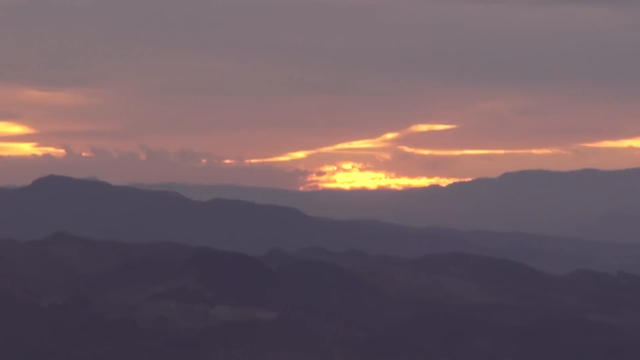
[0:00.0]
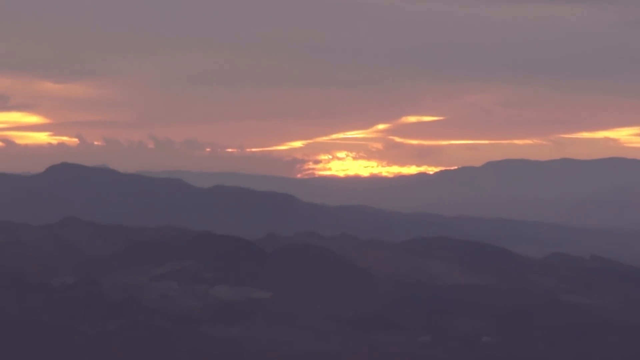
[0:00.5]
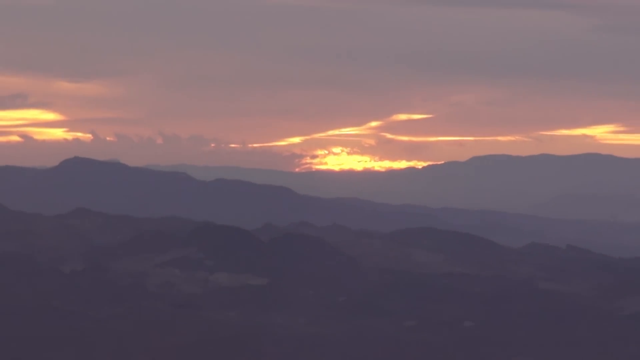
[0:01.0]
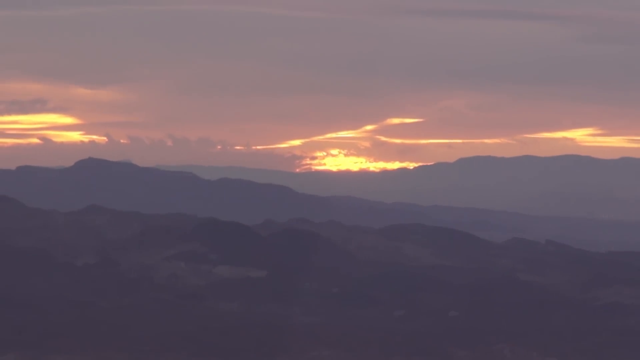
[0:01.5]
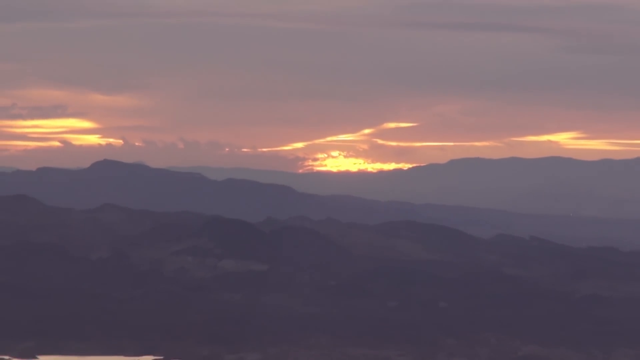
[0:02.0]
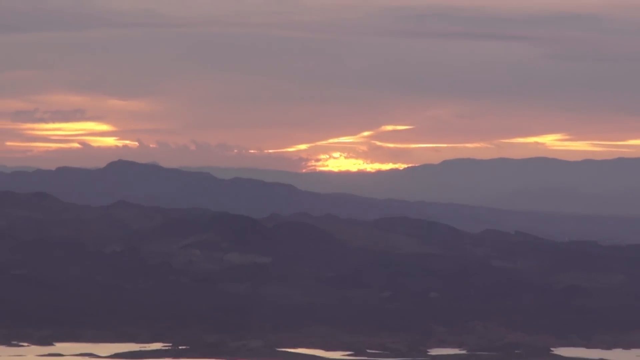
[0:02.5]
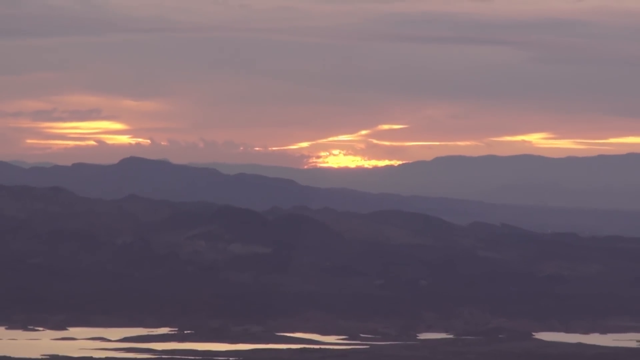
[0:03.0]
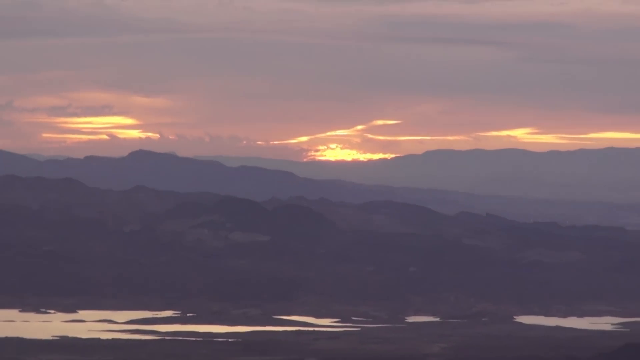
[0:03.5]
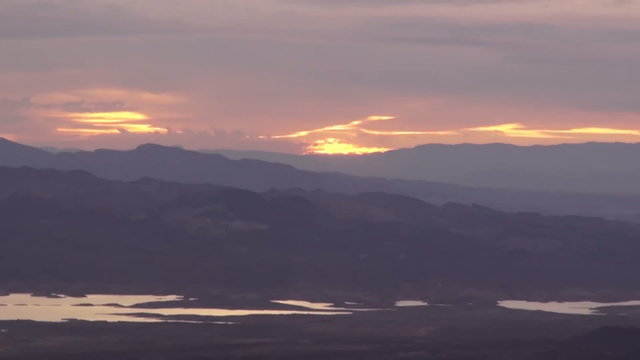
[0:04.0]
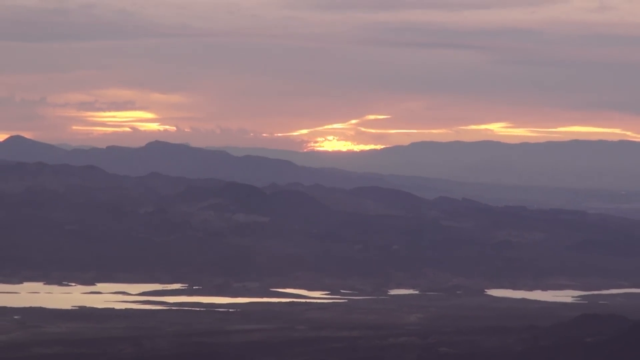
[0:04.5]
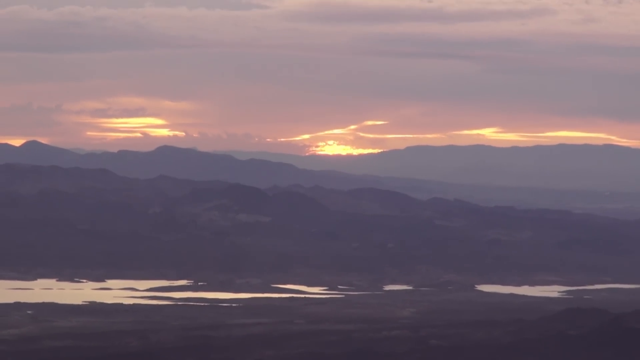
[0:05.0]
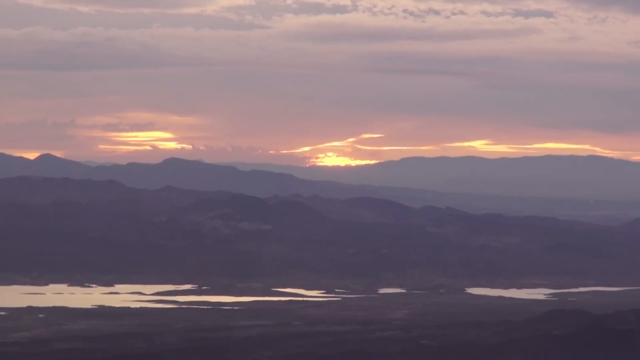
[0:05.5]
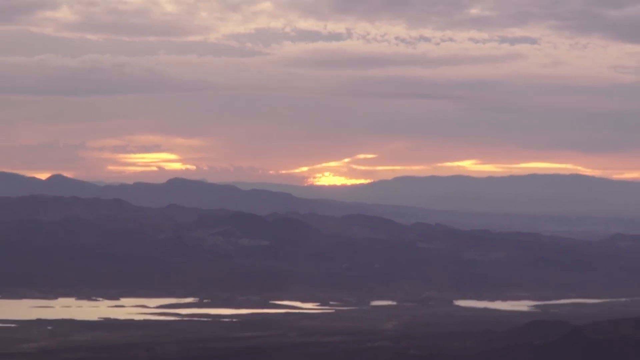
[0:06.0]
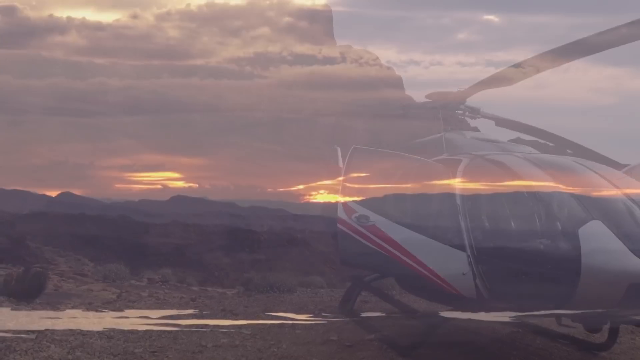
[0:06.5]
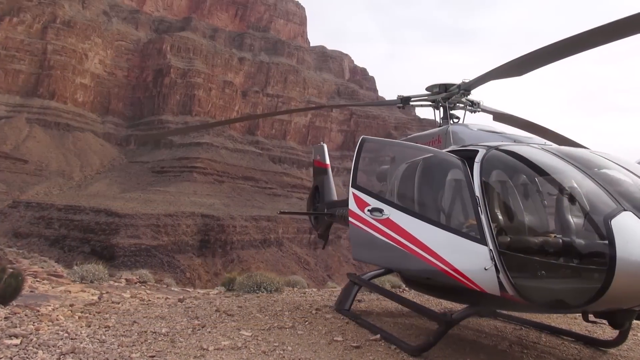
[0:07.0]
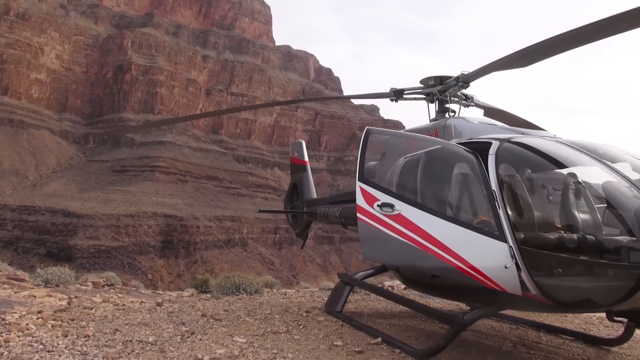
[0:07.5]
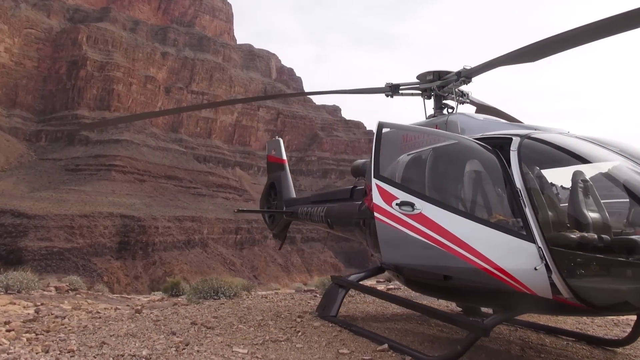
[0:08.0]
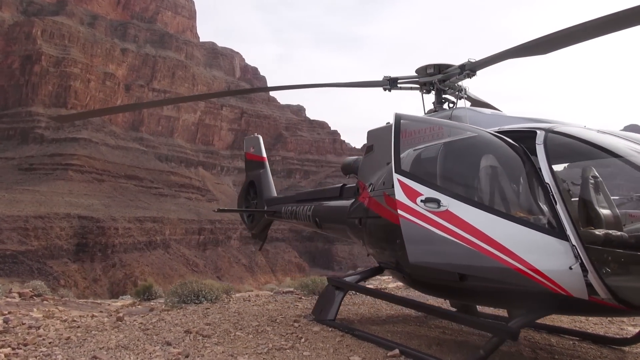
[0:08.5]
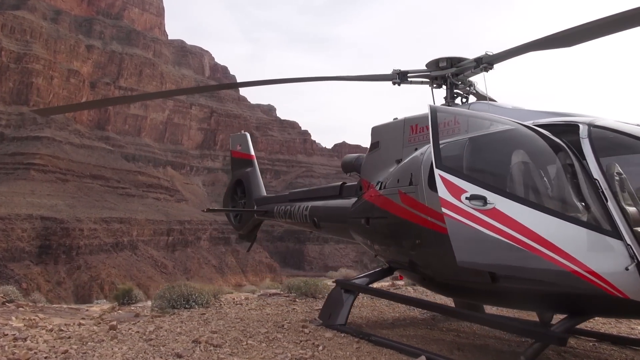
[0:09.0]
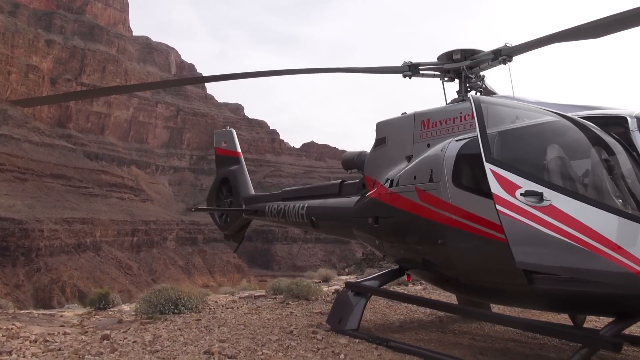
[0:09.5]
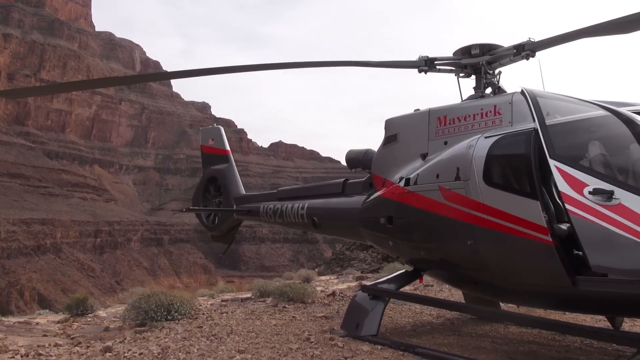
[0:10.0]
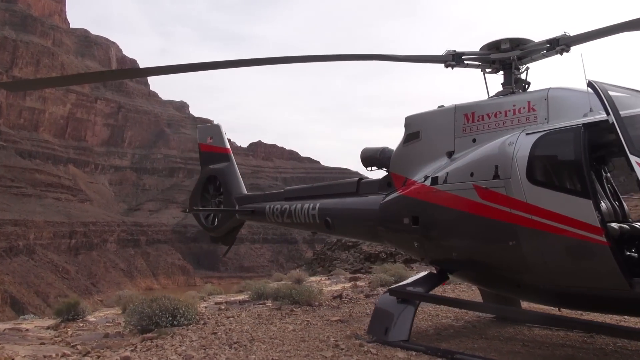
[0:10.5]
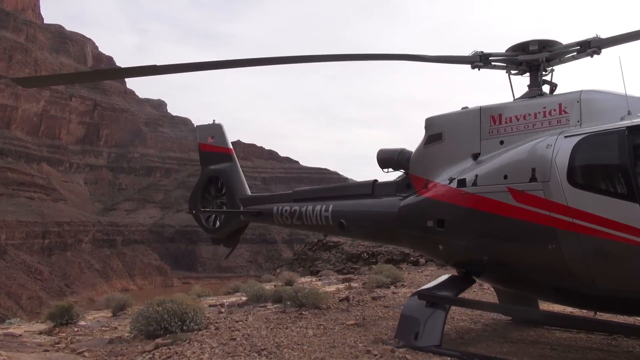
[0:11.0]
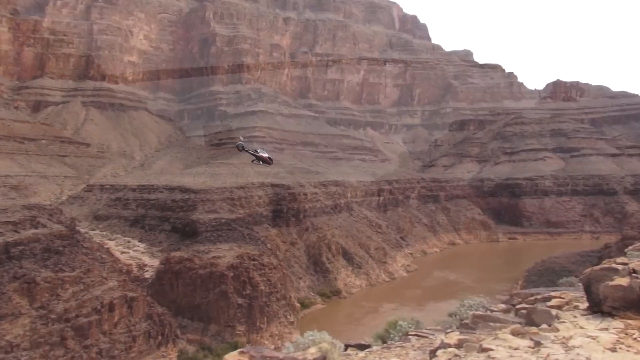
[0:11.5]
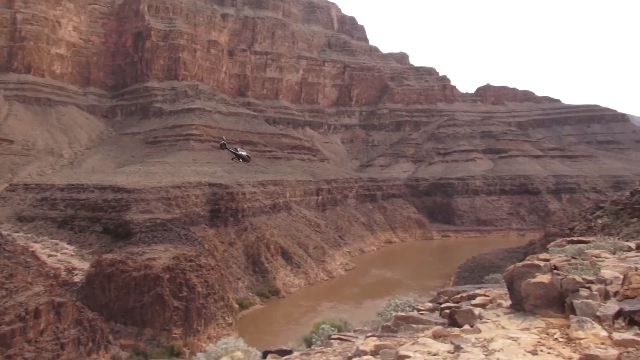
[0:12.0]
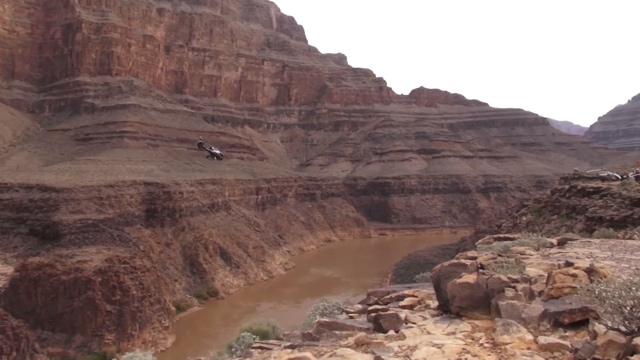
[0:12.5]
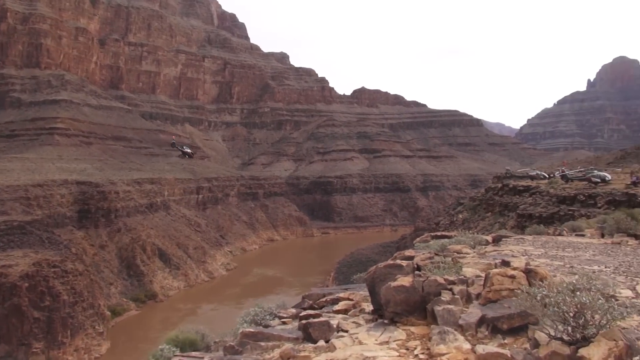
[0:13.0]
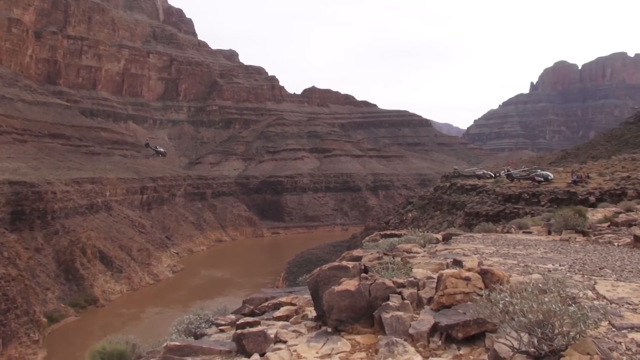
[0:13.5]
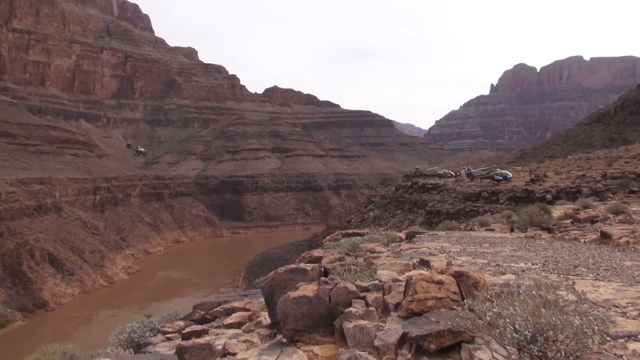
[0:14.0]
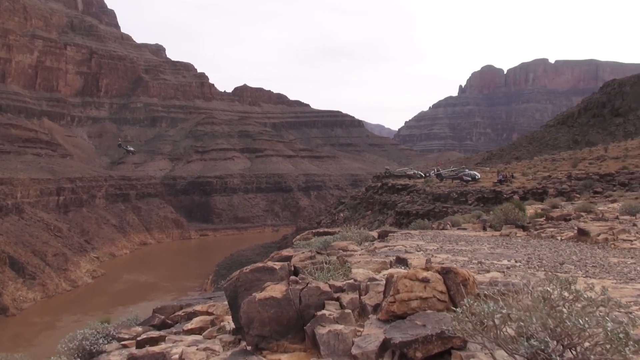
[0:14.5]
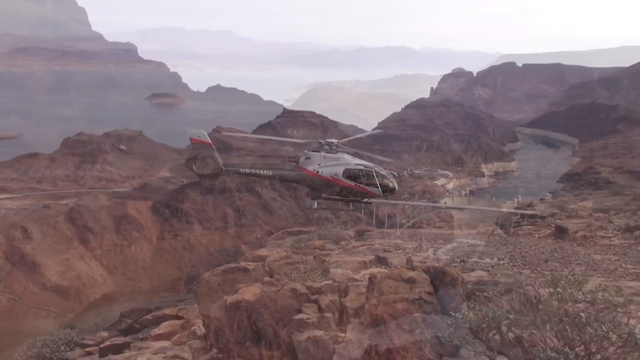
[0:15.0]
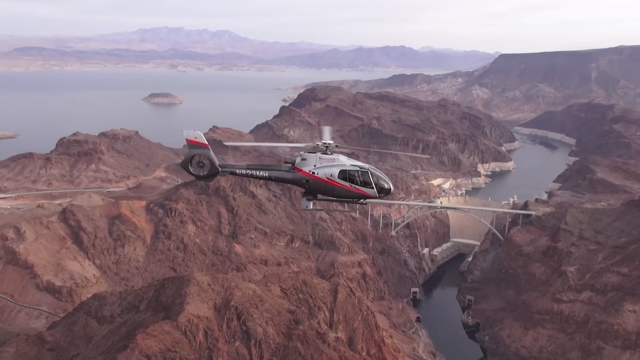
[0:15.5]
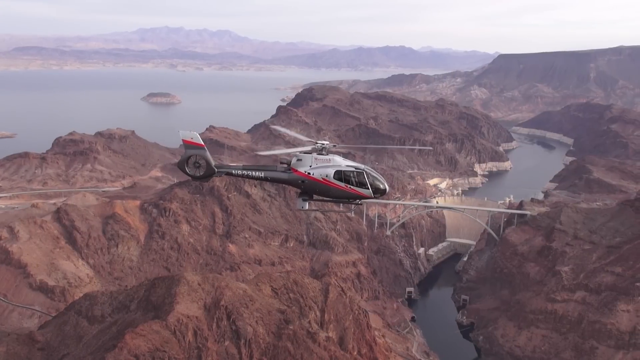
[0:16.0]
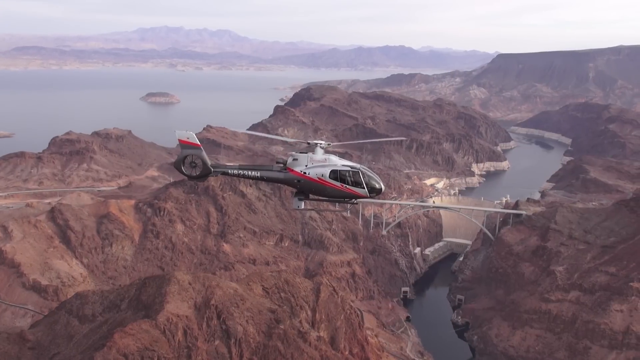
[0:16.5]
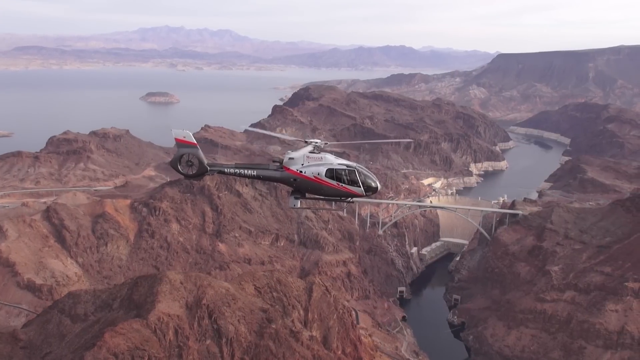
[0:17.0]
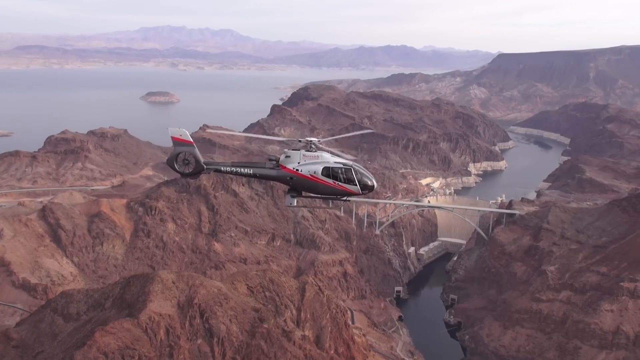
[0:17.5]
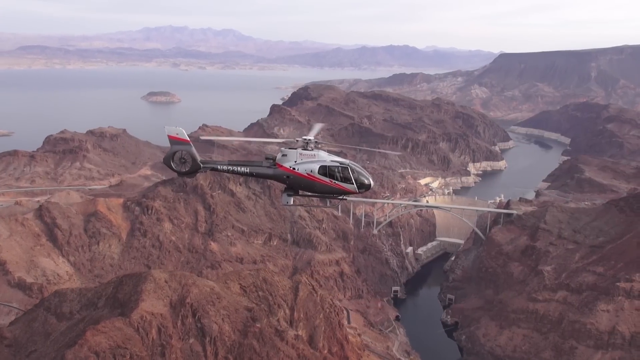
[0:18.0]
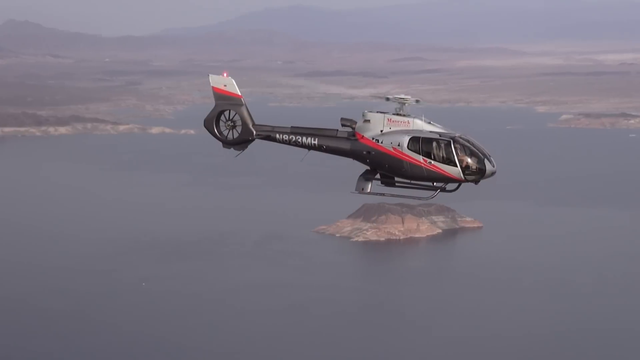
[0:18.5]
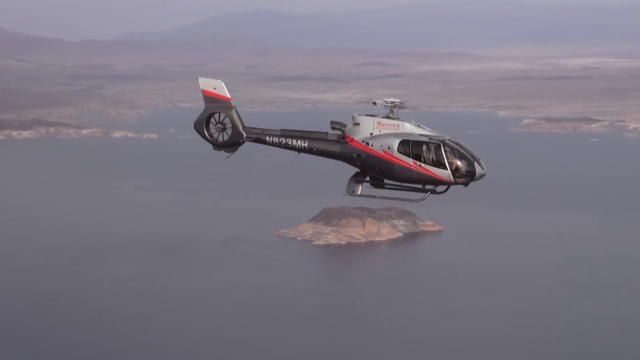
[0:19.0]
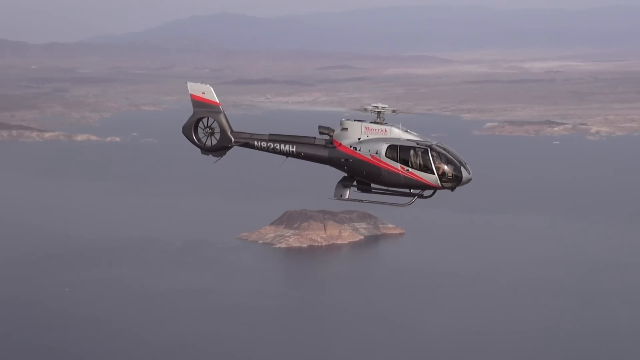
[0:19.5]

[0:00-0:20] A mountainous landscape appears under a sky that is not clear, with what seems to be either a sunrise or a sunset. A helicopter, apparently from Maverick, moves about over the mountainous land. There are some bridges and cliffs, and there seems to be a sea in the area. Two helicopters appear, and there seem to be some people on them. The helicopters go above a city close by the mountainous land, and the people aboard apparently are on vacation, exploring the city.